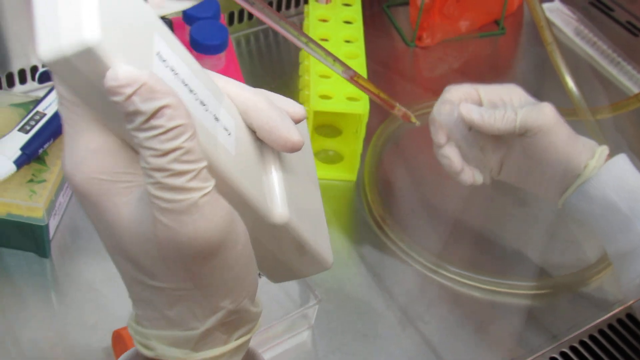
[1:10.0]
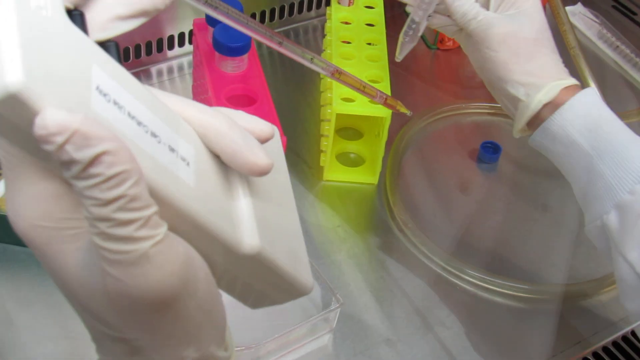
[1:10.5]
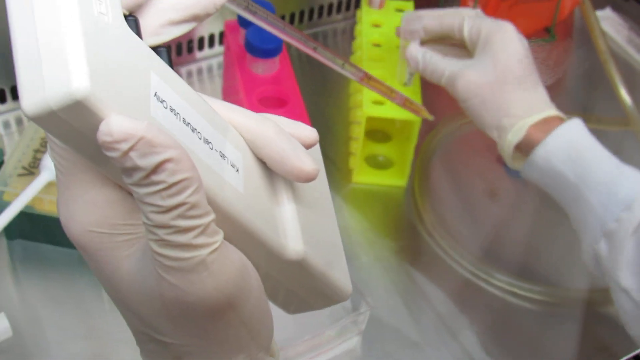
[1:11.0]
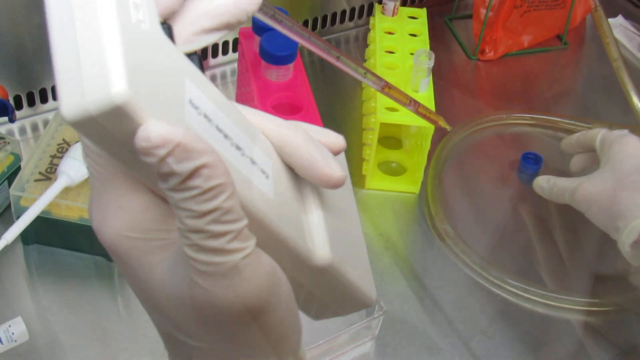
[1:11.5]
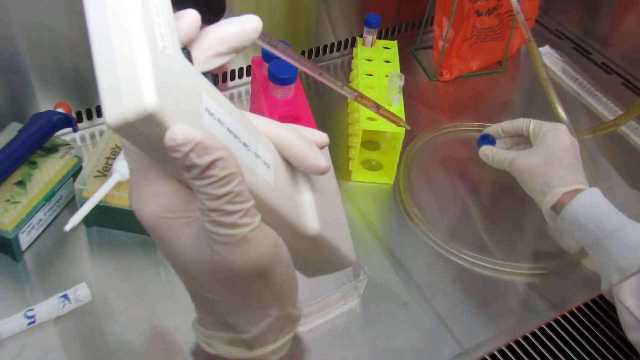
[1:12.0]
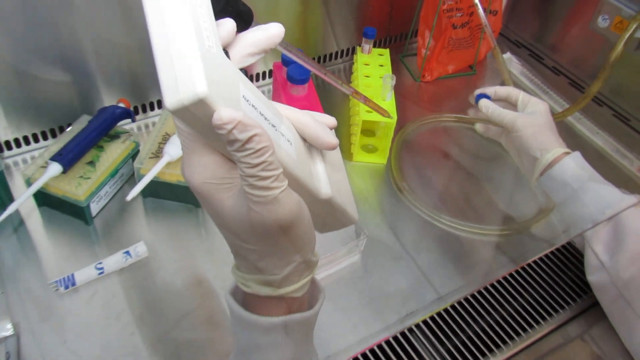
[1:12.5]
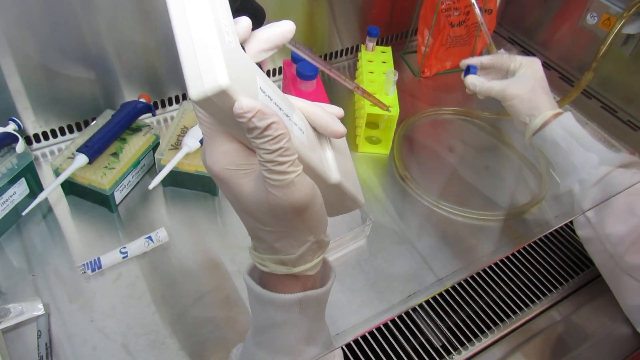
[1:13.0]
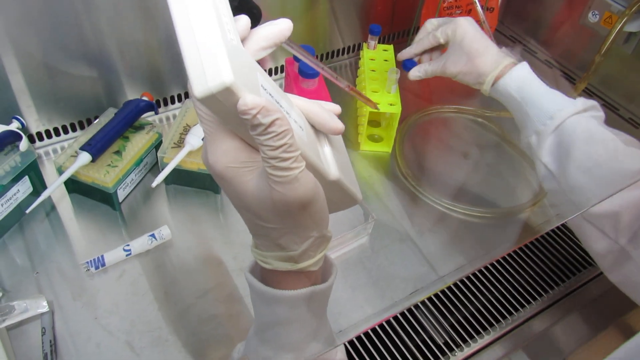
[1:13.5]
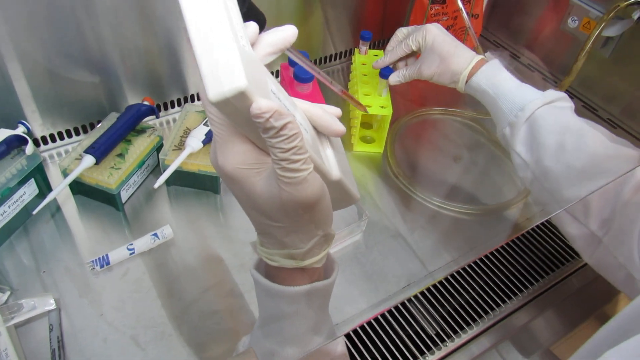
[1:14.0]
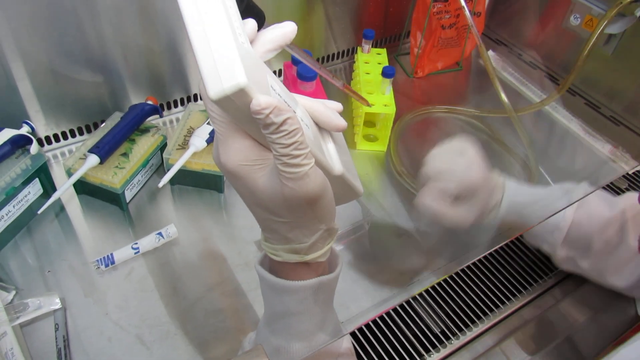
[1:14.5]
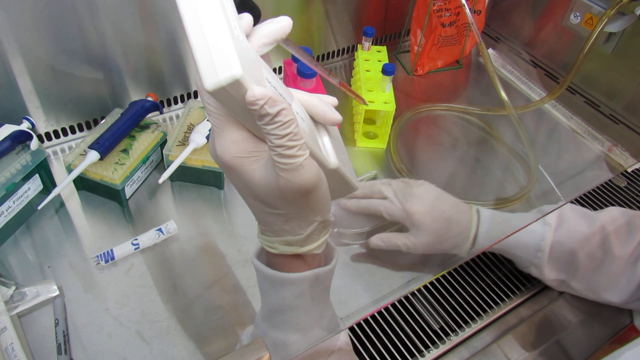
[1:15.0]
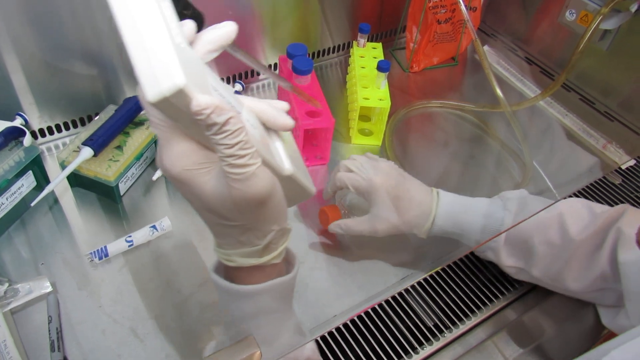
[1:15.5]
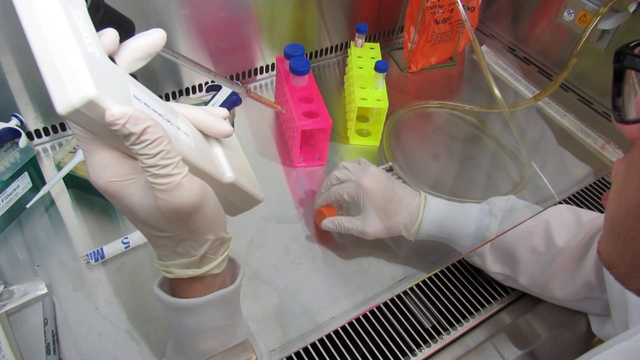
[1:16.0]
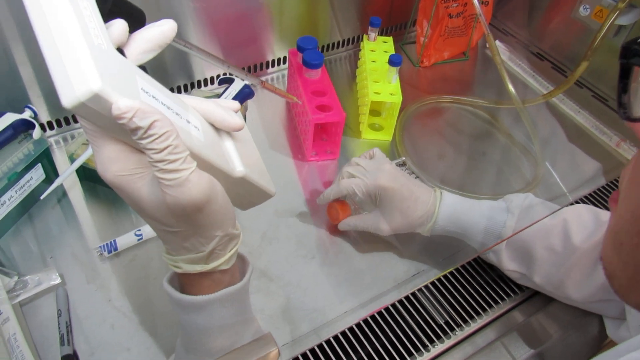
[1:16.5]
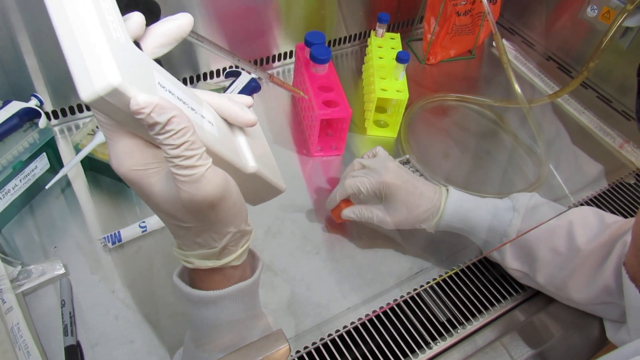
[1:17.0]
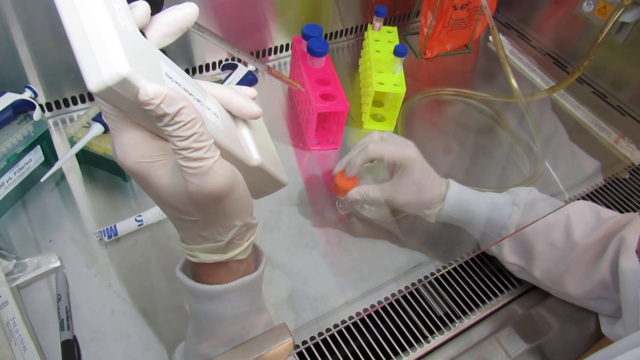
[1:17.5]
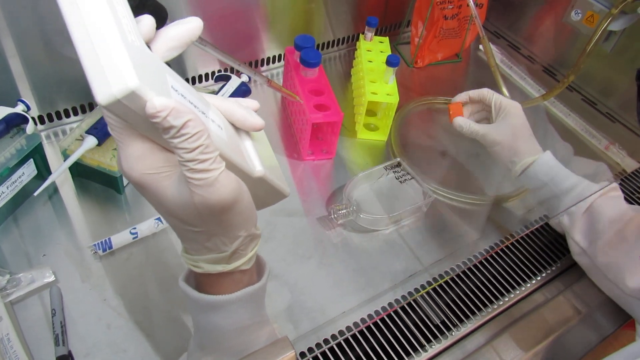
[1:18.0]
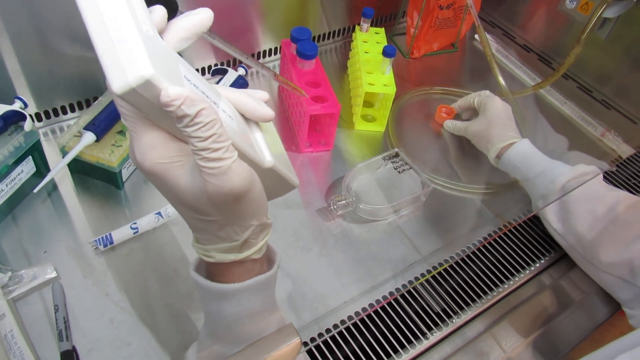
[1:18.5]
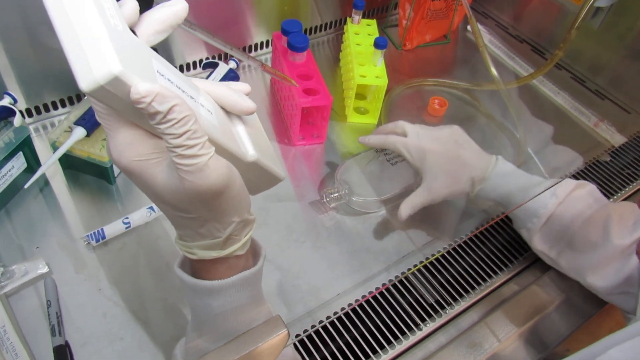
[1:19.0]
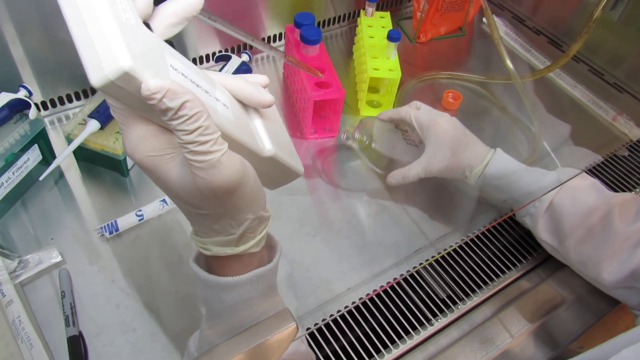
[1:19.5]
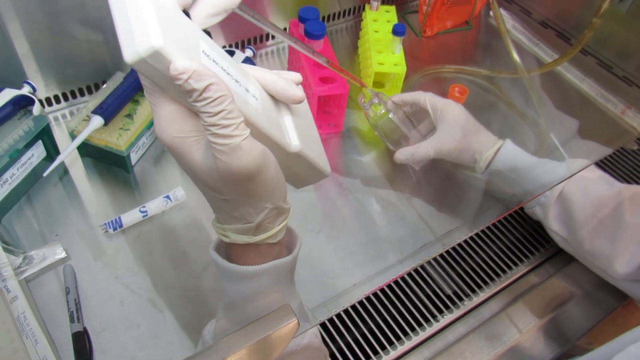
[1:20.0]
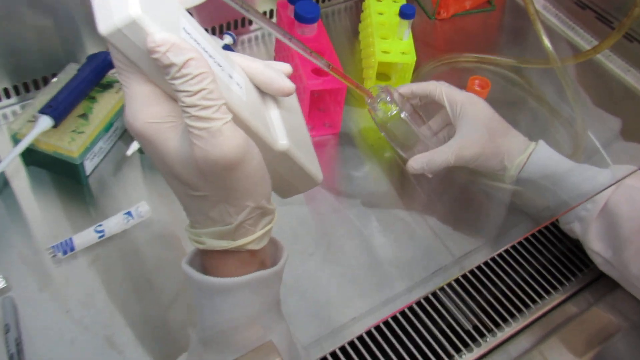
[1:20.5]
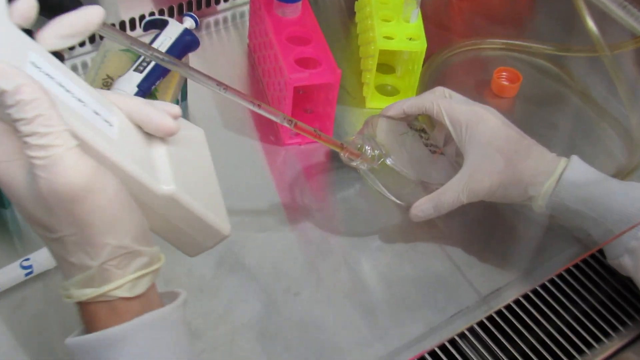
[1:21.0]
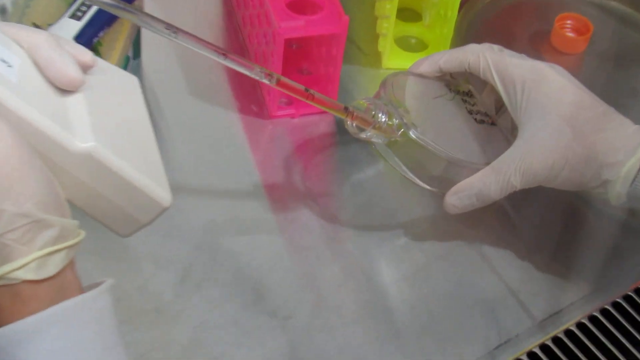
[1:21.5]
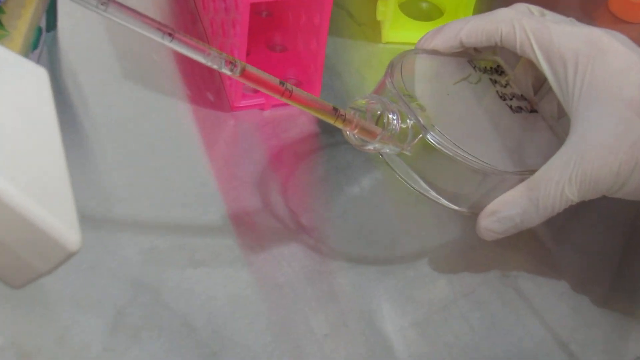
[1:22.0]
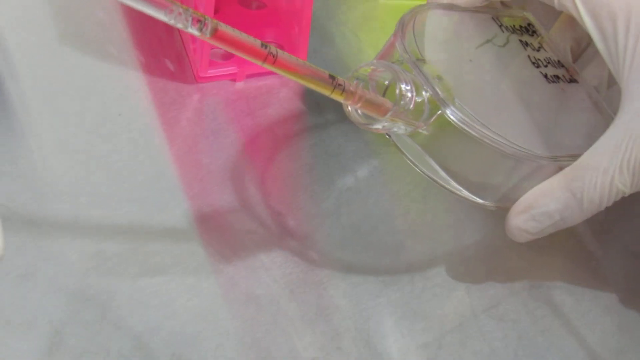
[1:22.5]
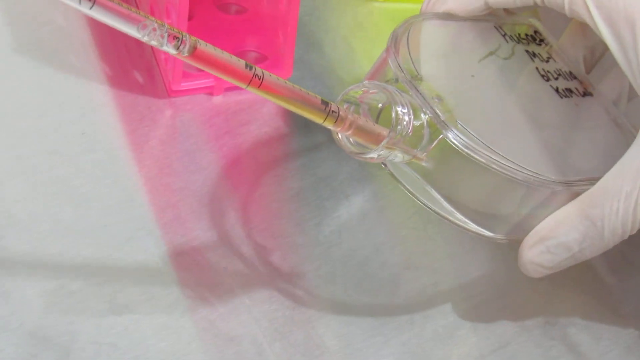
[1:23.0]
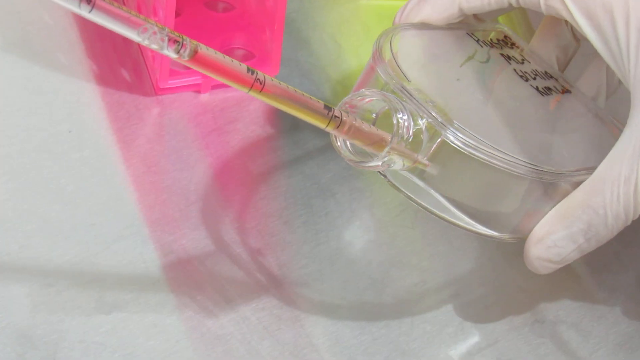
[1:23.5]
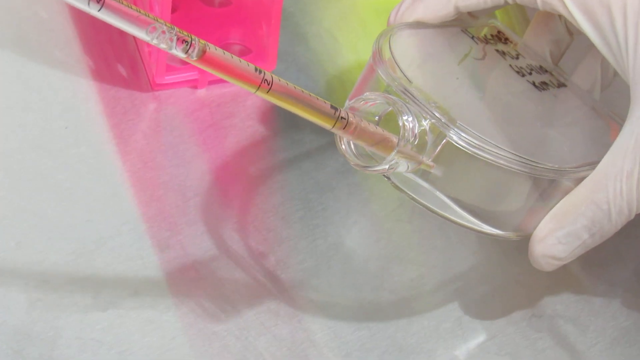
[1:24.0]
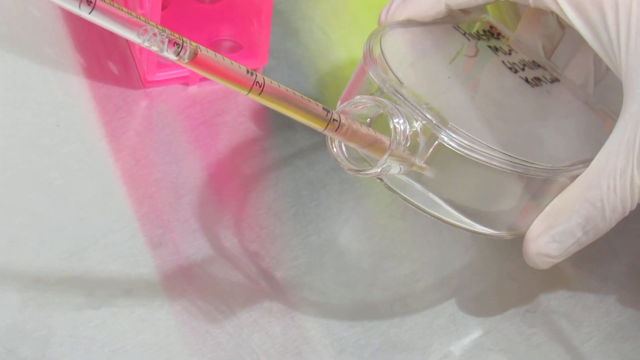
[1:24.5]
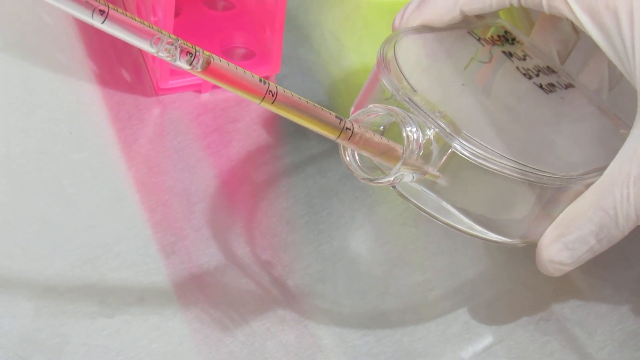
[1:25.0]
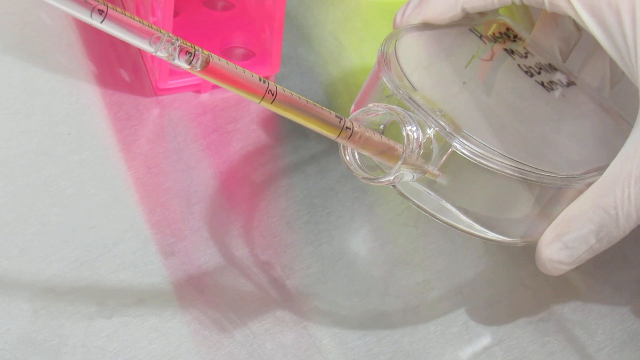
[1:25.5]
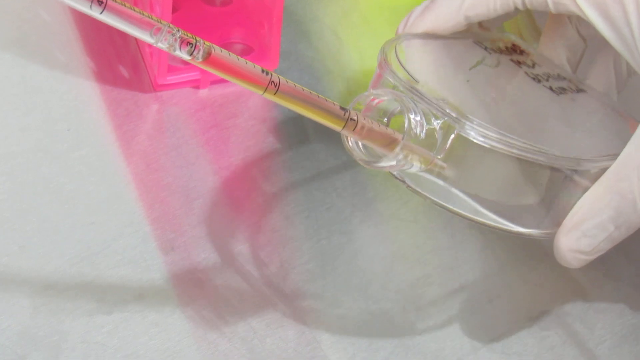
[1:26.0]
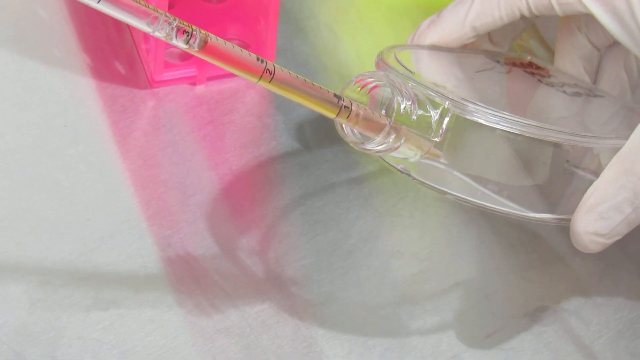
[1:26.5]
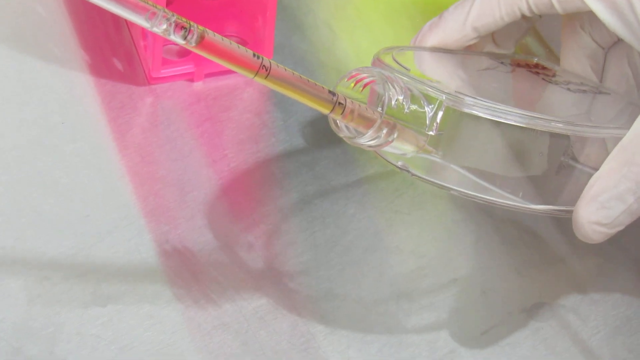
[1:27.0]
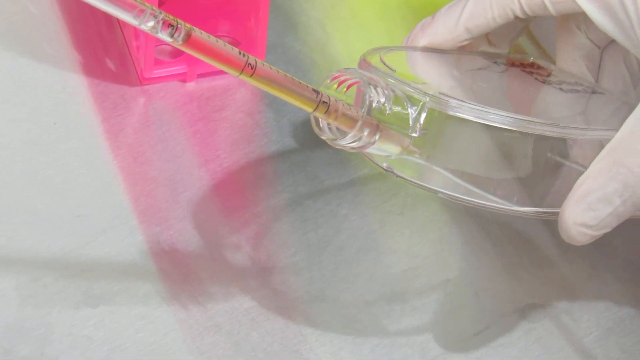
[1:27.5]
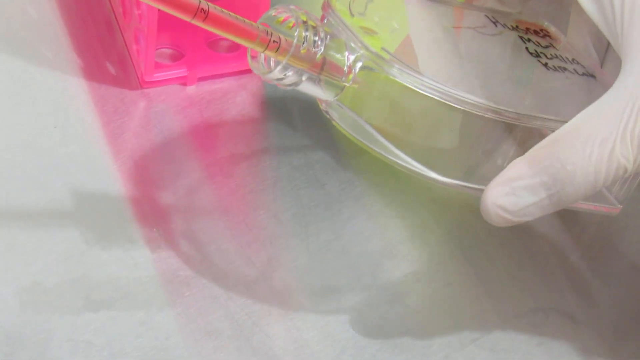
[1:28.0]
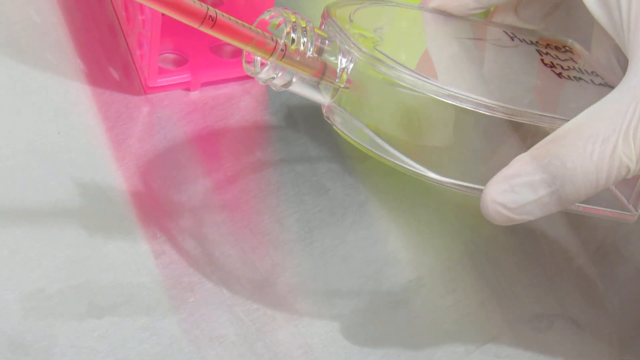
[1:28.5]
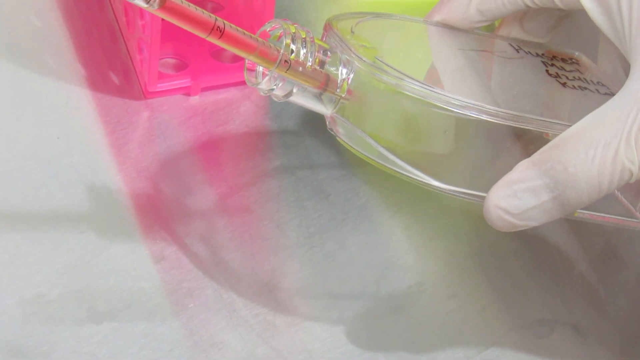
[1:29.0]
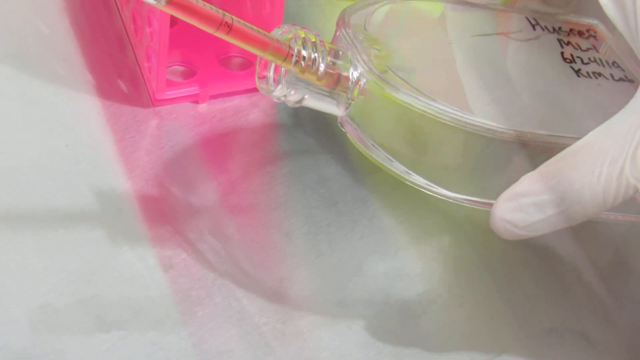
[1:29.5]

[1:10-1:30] Reddish orange liquid is inside what may be a pipette, looking like the long tube part of one. The person puts the test tube back in the test tube holder of the same color, but not in the same spot, placing it on the opposite side. The person tilts their head down slightly, revealing glasses with a black frame and clear lens, possibly laboratory glasses. With the right hand, the person takes the orange lid off the glass or plastic bottle from the beginning. The pipette is inside the bottle, and the liquid looks like it might be getting dripped in.